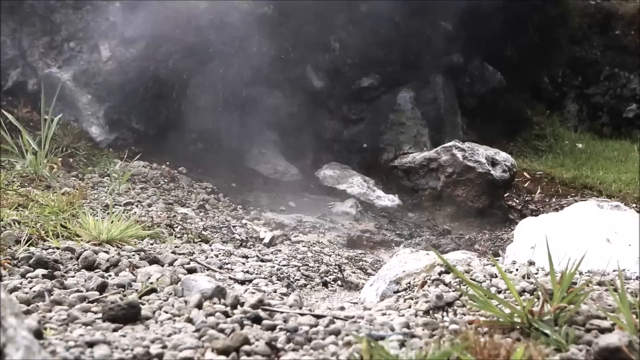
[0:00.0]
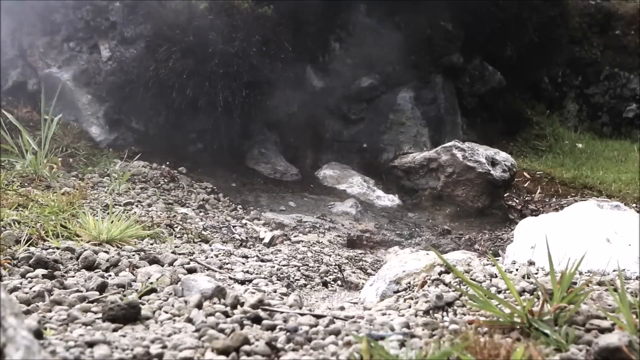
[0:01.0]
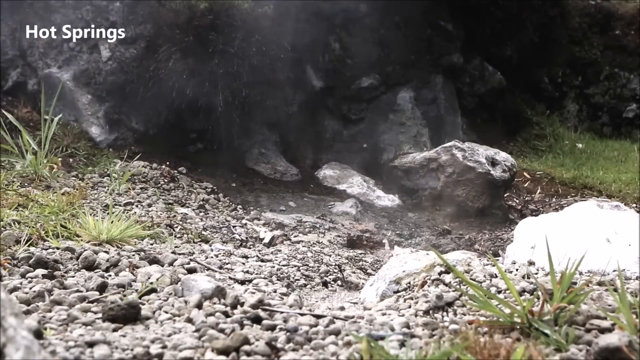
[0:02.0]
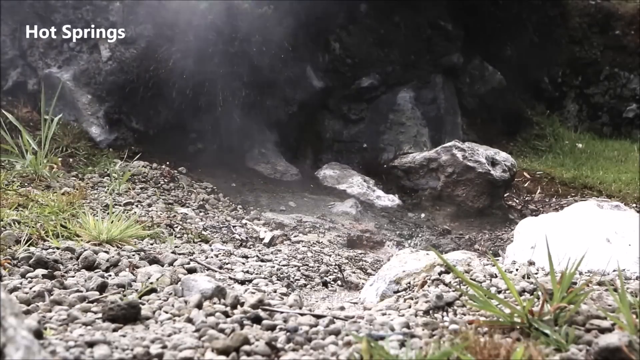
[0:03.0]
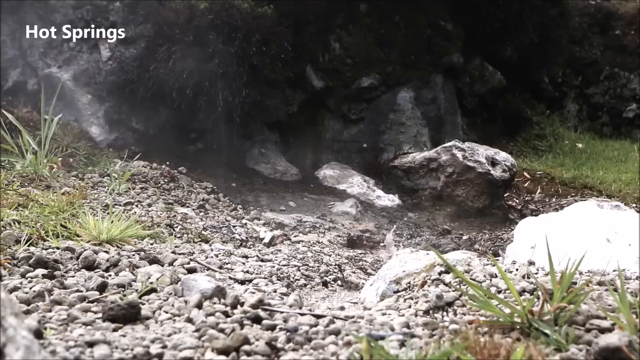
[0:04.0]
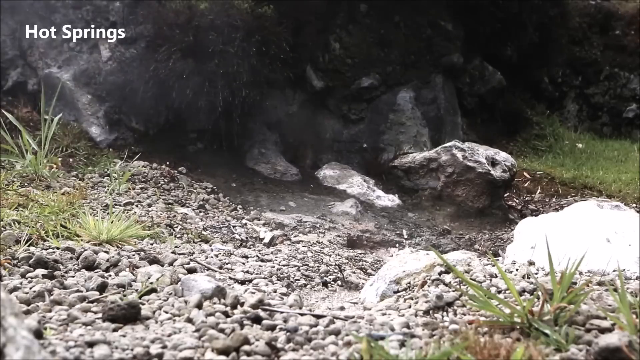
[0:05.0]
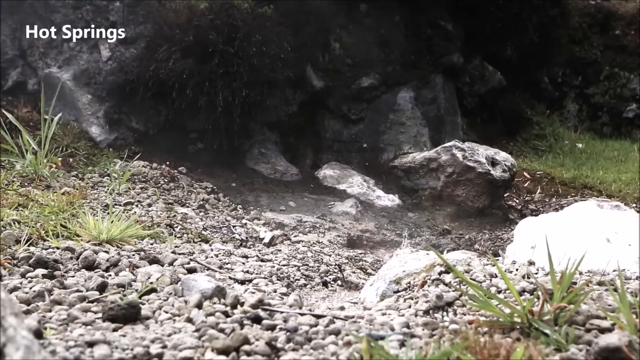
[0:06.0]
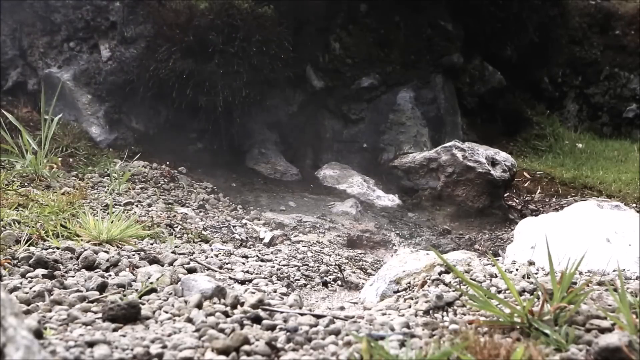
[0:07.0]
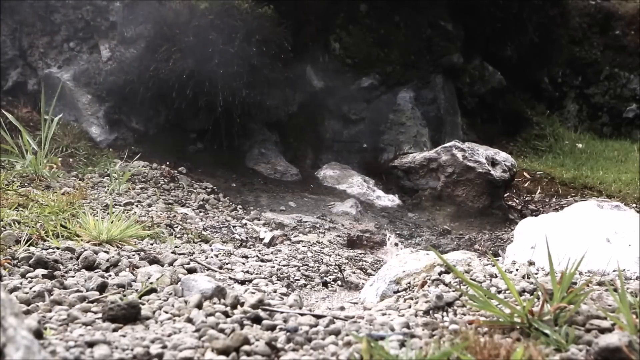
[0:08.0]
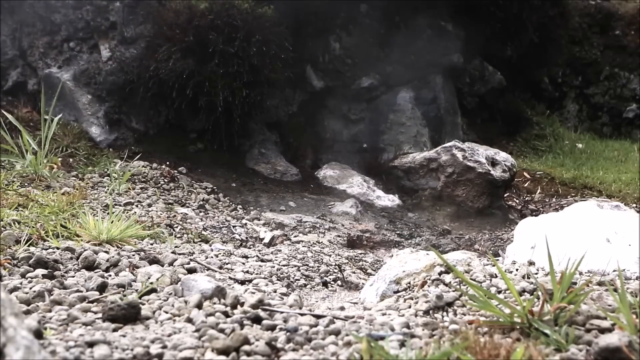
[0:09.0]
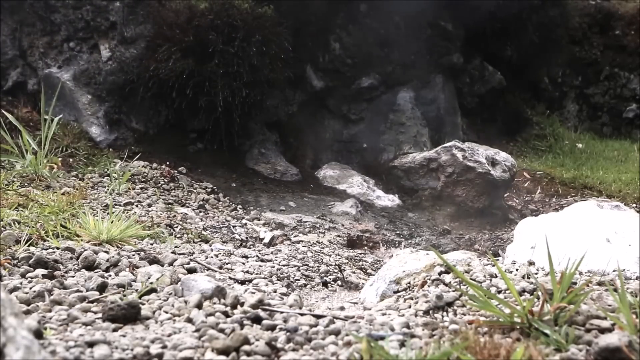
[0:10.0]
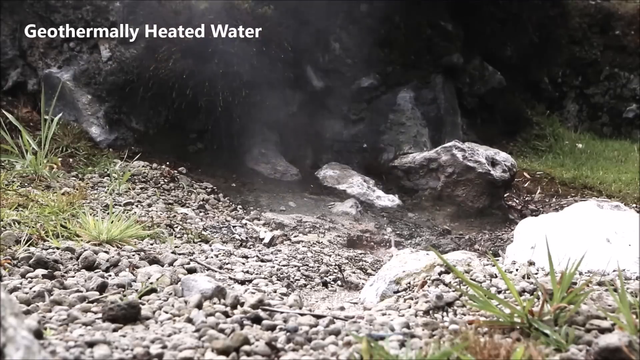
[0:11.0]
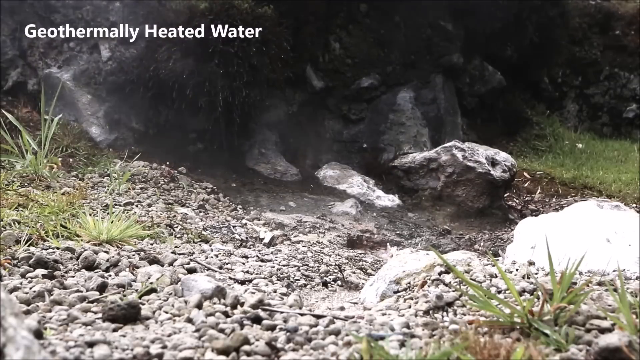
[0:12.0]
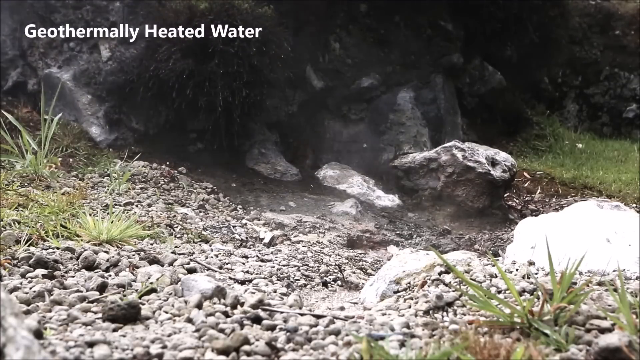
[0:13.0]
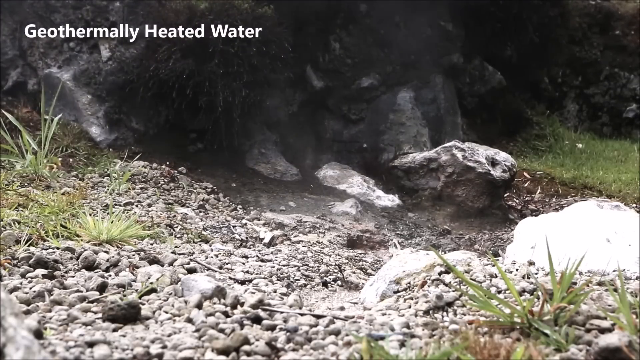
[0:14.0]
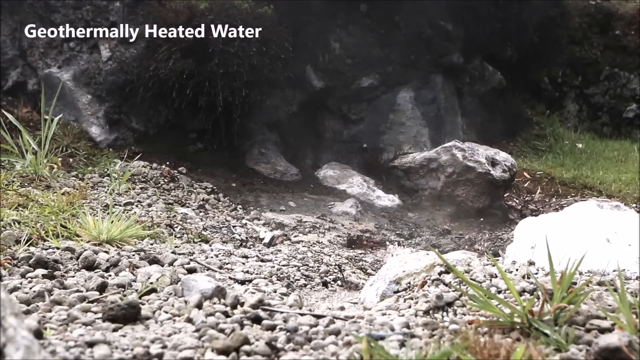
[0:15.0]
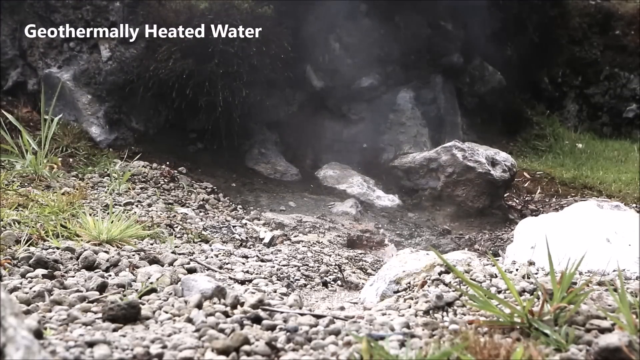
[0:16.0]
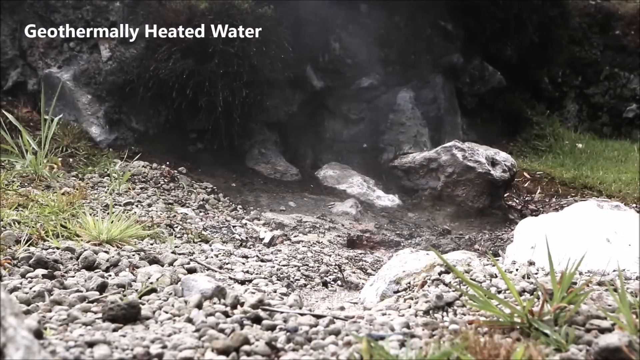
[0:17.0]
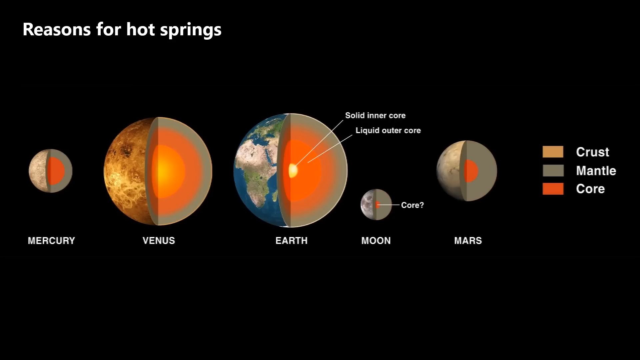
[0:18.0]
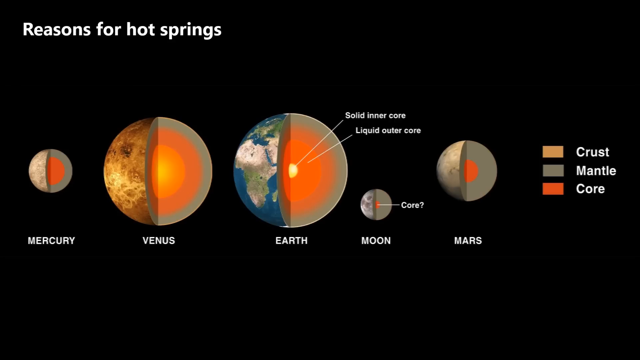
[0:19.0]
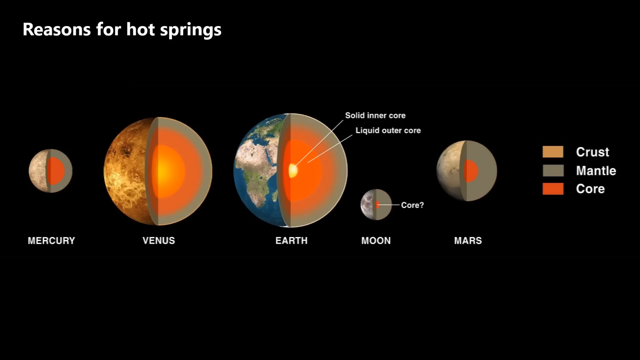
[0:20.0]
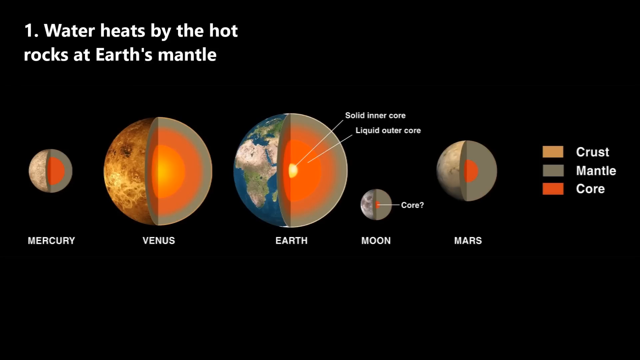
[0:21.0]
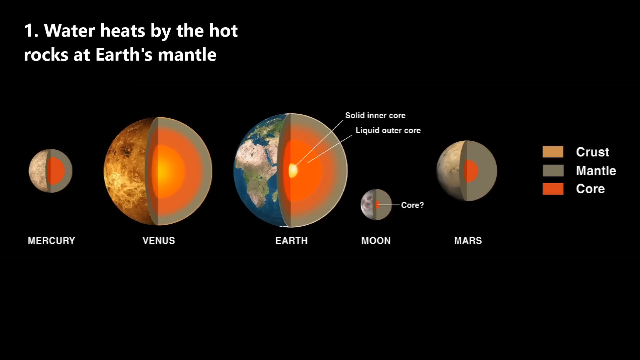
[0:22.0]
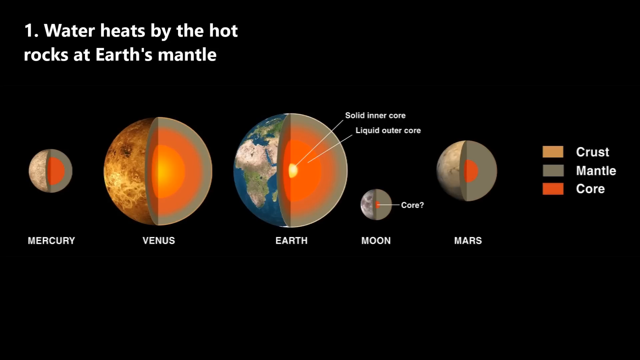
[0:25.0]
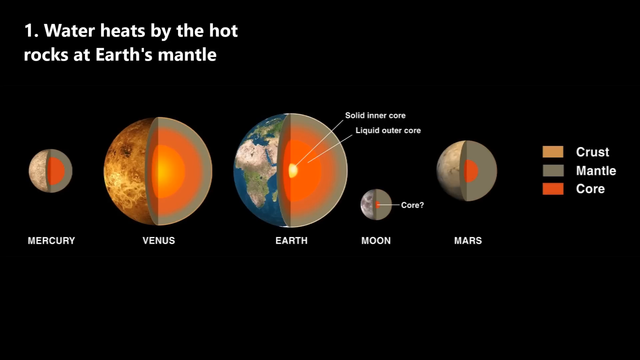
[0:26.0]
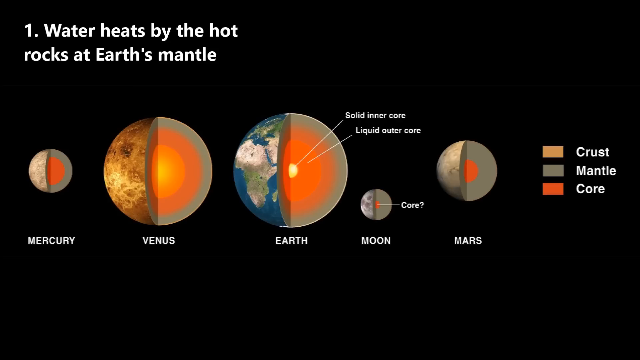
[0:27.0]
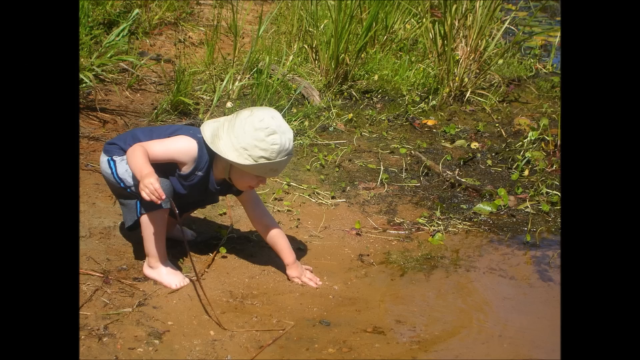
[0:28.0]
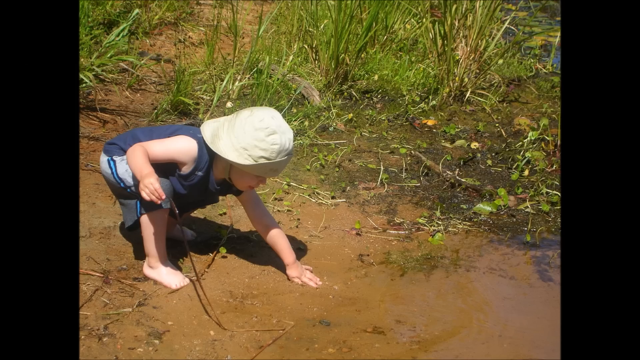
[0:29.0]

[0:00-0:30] The footage shows a place where the ground is full of rocks, with a wall of big rocks in the background and some grass. Vapour seems to be coming out of the water. A caption on the screen reads "hot springs"; it goes away and another appears reading "geothermally heated water" as the vapour continues to rise. Next comes an illustration explaining the reasons for hot springs, with text reading "One water heats by the hot rocks at Earth's mantle." In the middle is a circle, the Earth, opened in half to show the solid inner core in yellow and the liquid outer core in orange. Venus, the Moon, Mars and Mercury also appear as illustrations cut in half with their inner parts showing. The video then cuts to a picture of a young little kid in a place with some mud and grass; he is touching the mud.